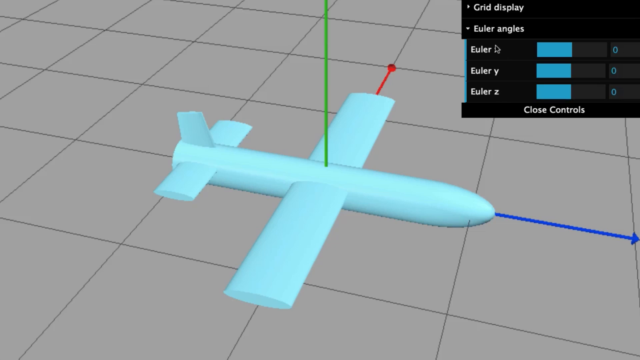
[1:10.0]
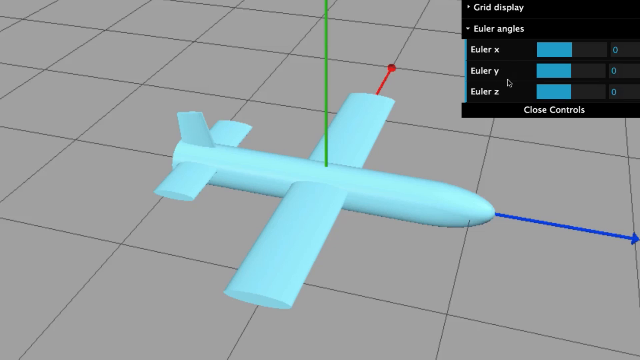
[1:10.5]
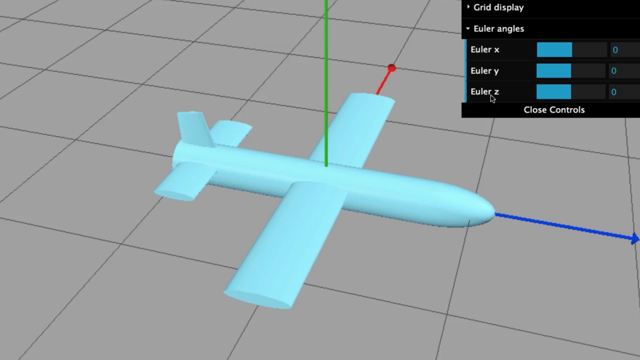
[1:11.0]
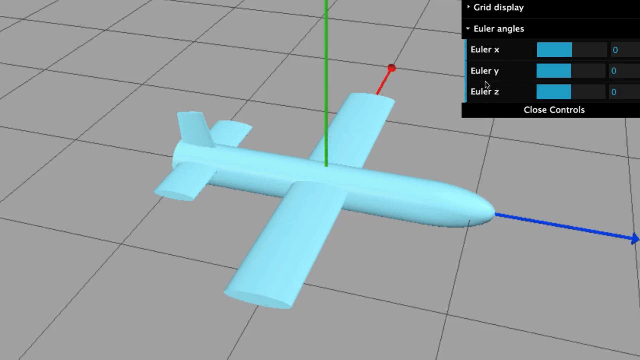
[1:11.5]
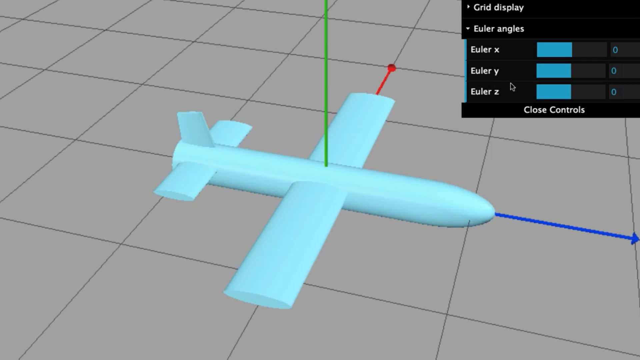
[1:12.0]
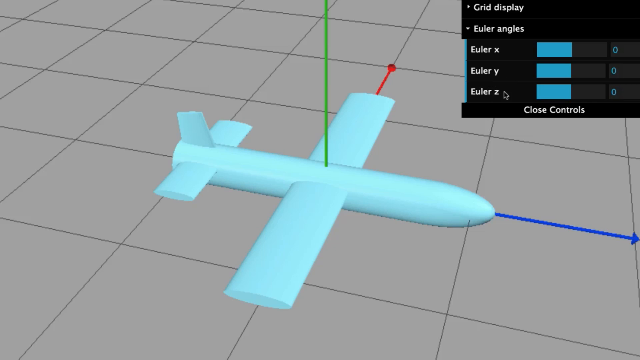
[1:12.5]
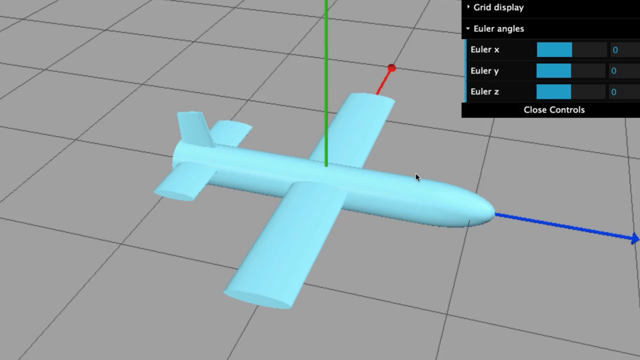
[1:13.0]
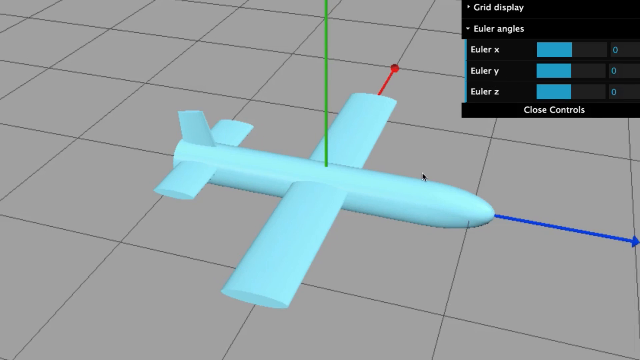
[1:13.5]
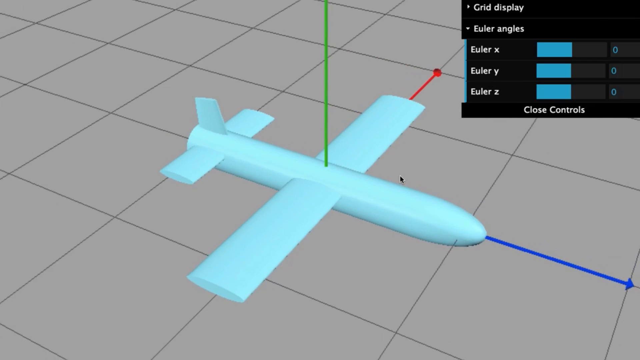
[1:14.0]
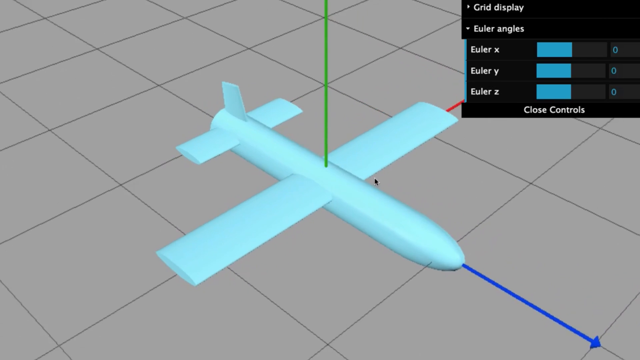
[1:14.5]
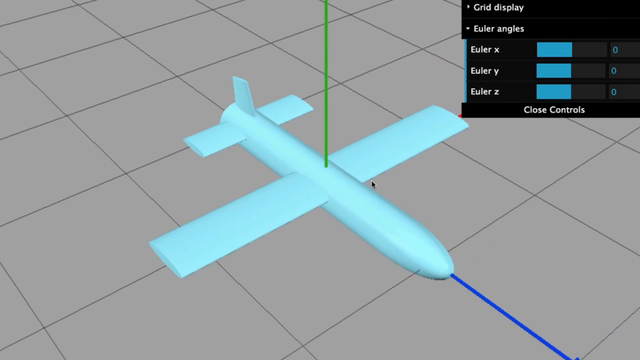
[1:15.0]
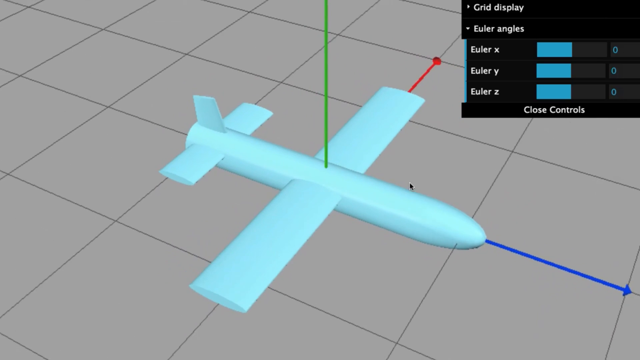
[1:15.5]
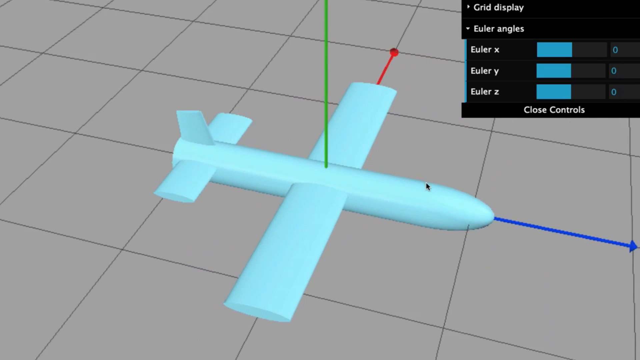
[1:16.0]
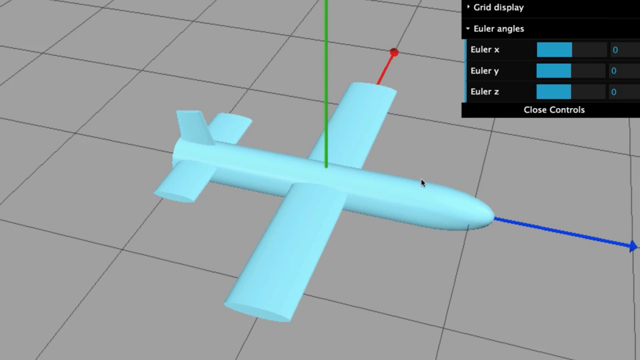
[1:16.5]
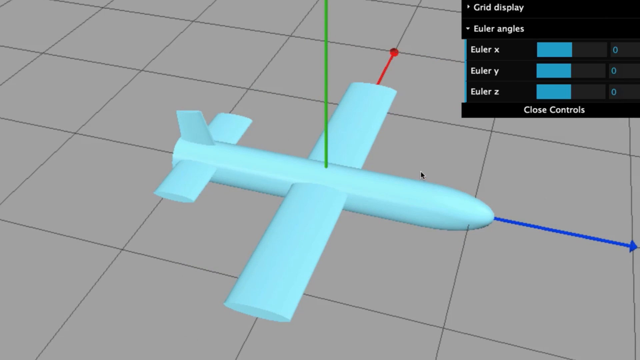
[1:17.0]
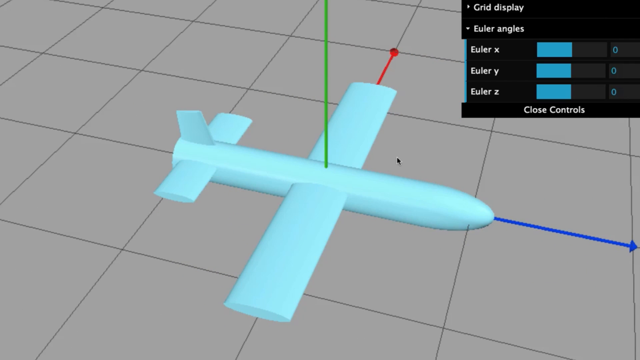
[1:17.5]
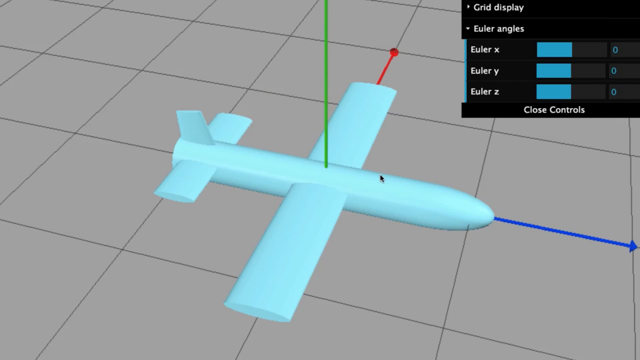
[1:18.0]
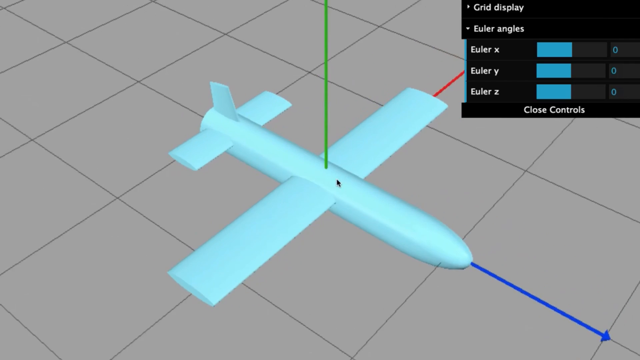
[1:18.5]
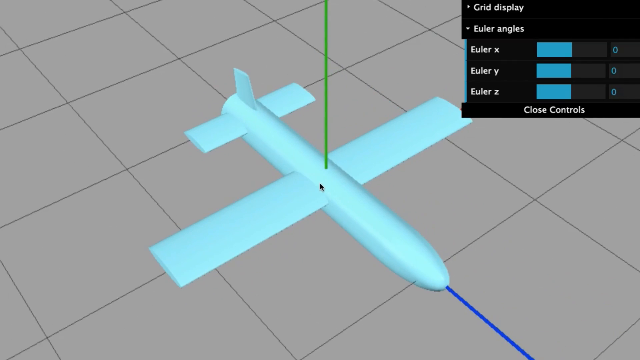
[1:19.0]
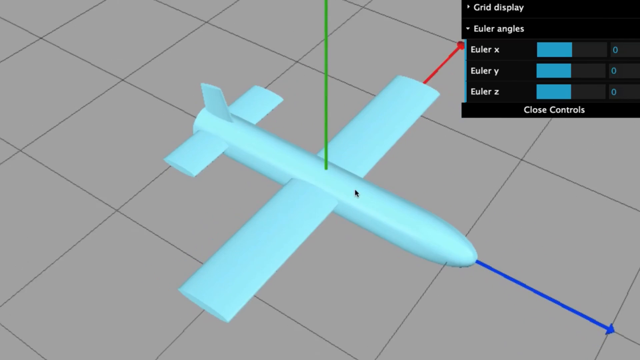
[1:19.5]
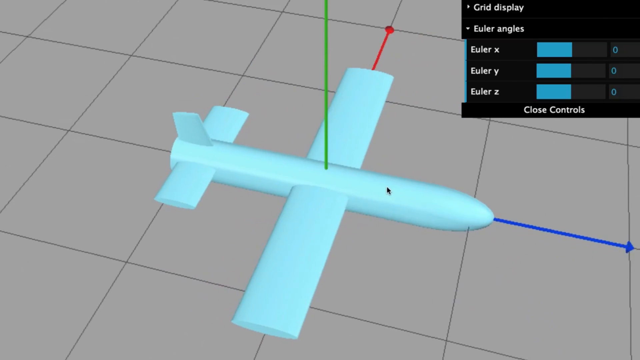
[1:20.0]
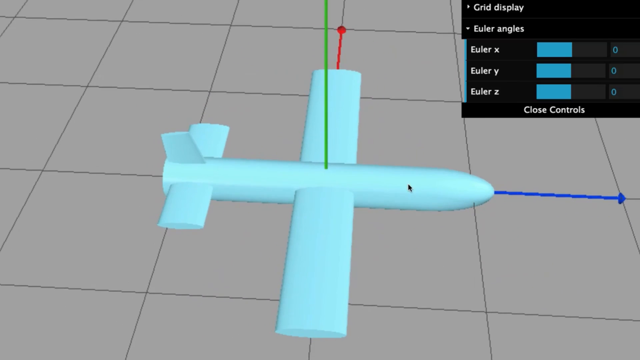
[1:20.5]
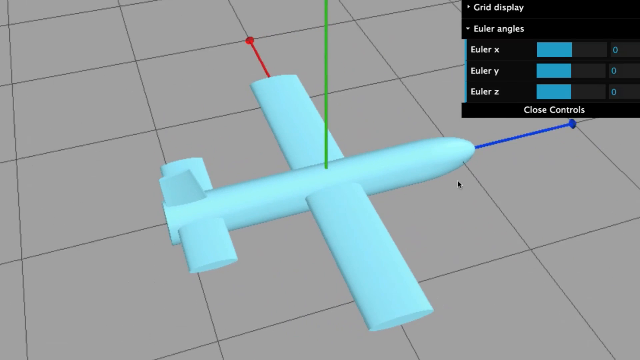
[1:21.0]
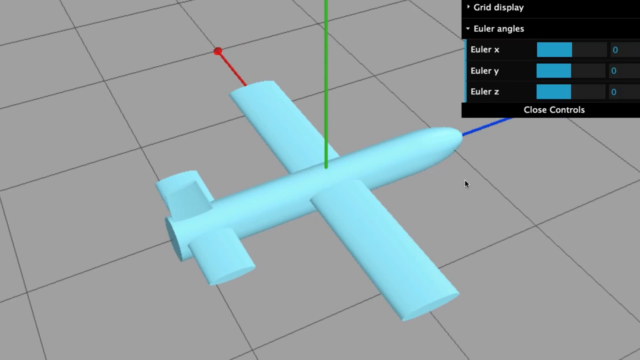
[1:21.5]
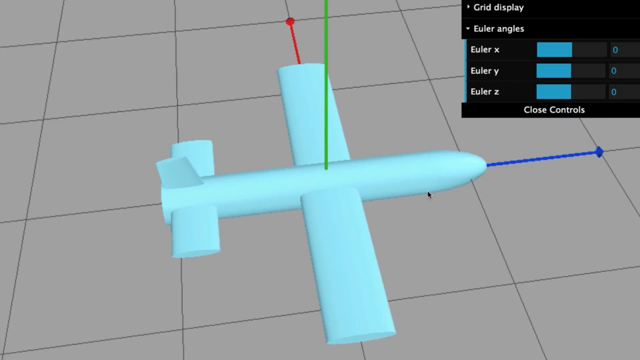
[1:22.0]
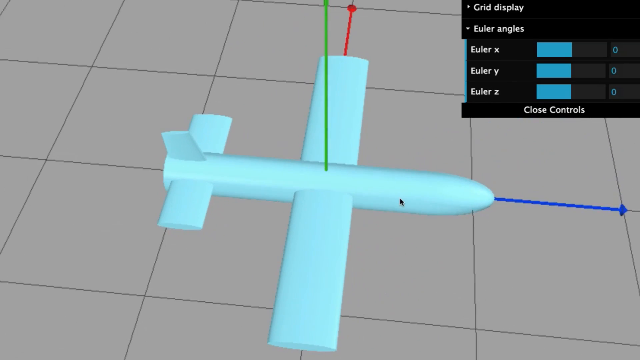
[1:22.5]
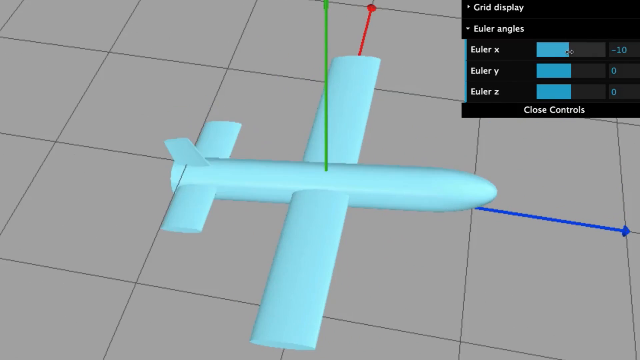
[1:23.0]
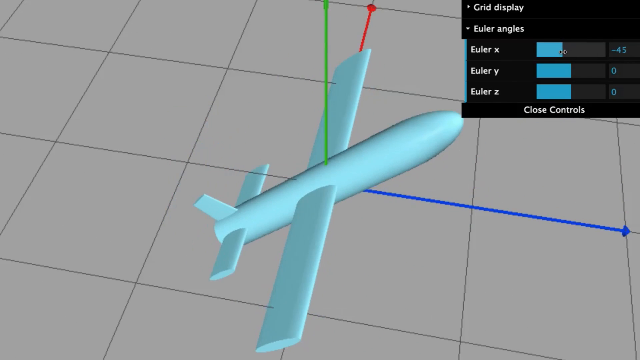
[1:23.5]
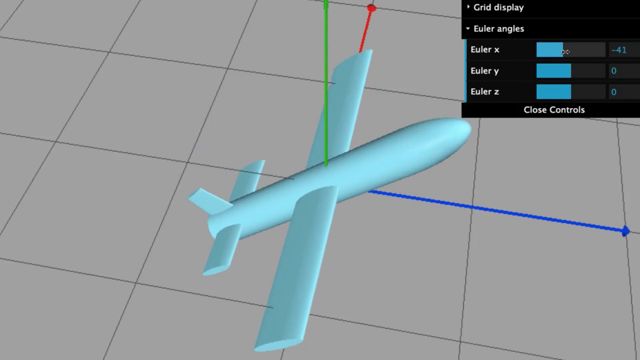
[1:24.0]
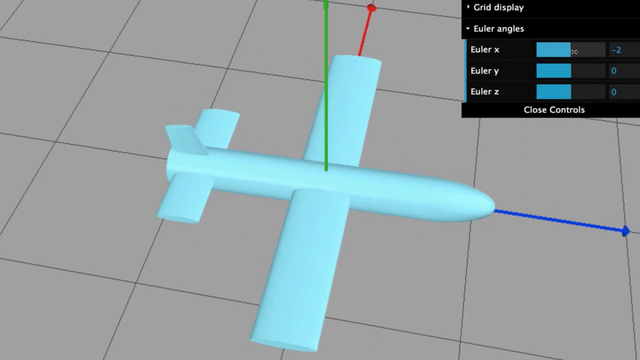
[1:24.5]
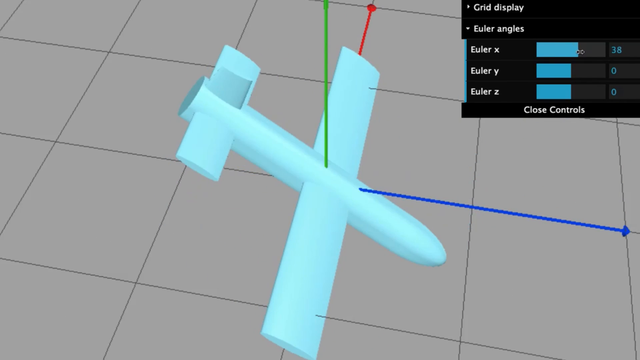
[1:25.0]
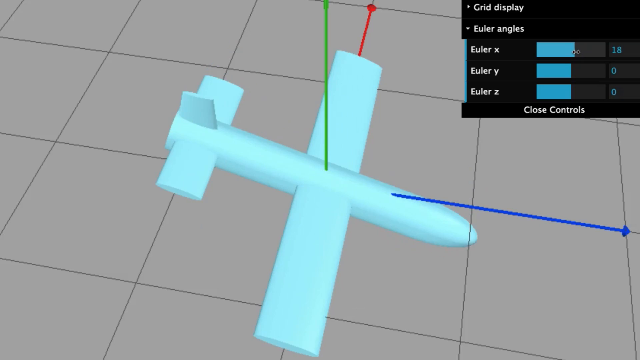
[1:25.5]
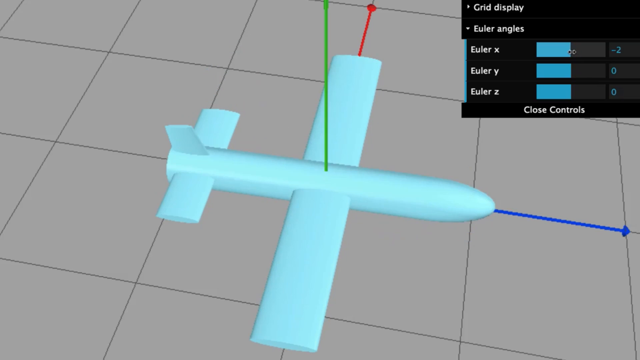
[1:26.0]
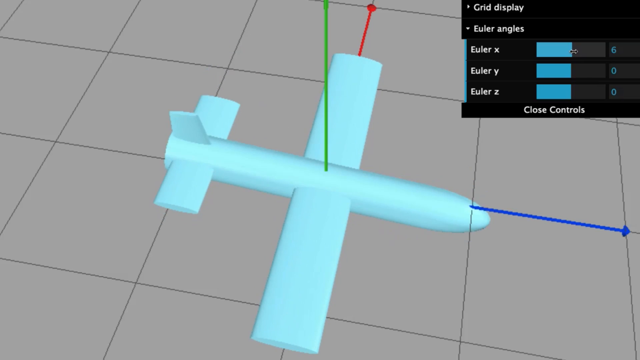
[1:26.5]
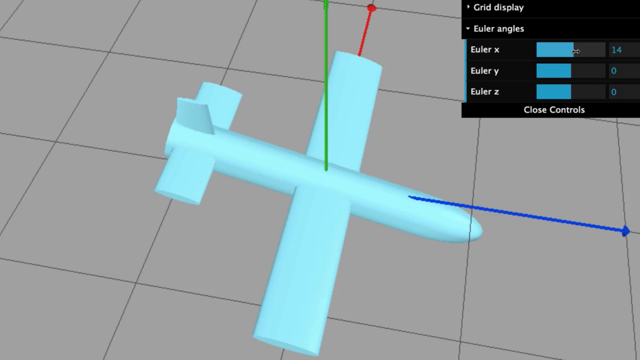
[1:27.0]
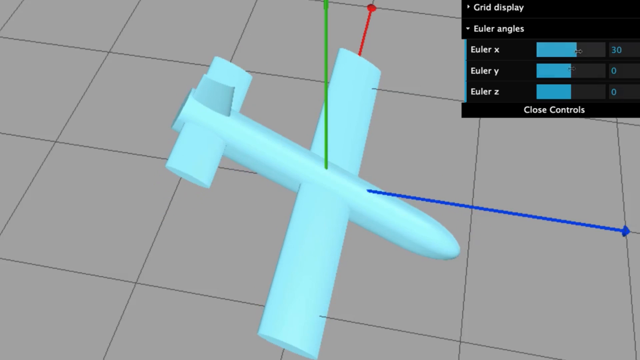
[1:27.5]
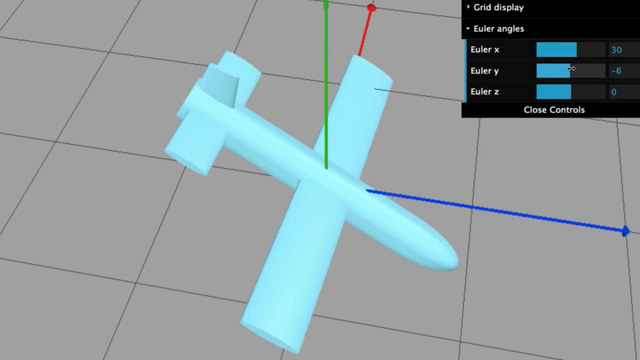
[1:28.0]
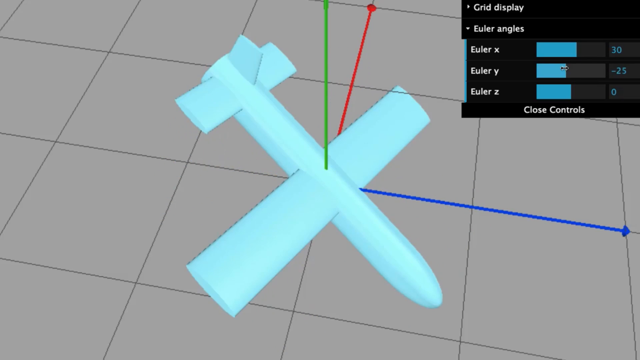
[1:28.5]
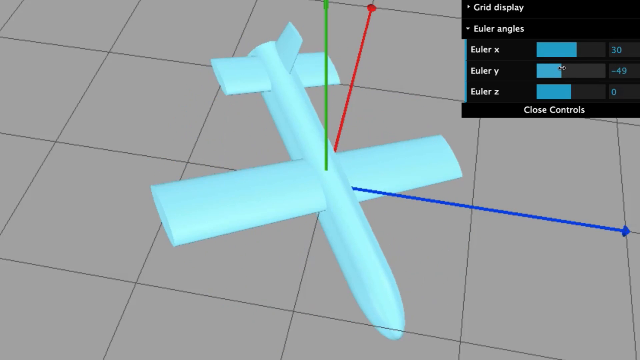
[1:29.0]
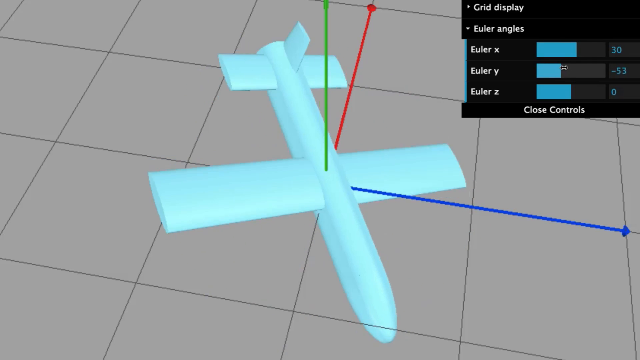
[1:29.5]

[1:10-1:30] The whole screen is made up of small gray squares, with a diagram of a small airplane in the middle: a blue tube for a body, two squares for wings, one off the left side and one off the right, a fin on the back and two small wings on the back. There are no windows; it is just a bare shape of an airplane. A green line comes in from the top of the screen down to the top of the airplane, and a blue arrow comes off the nose of the airplane and goes off the right side of the screen. A small mouse pointer is on the screen as somebody controls it, rotating the screen to the left and to the right. In the top right-hand corner is another, smaller black screen with "grid display" in white at the top, then "Euler's angles", then "Euler X", "Euler Y" and "Euler Z", each with a box to its right that is half blue and half black. Along the bottom of that black square is "closed controls". The person using the pointer rotates the plane through all views, at all different degrees.